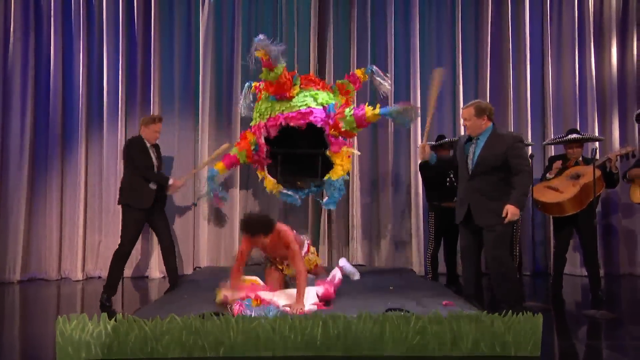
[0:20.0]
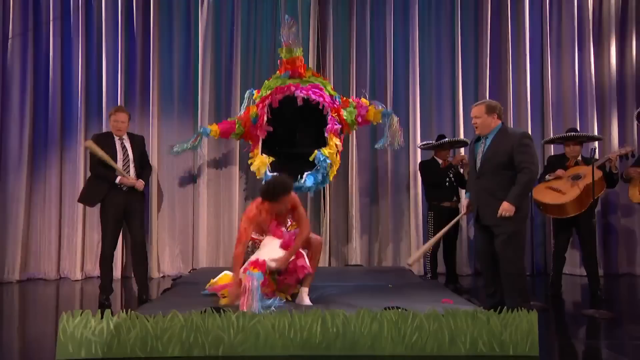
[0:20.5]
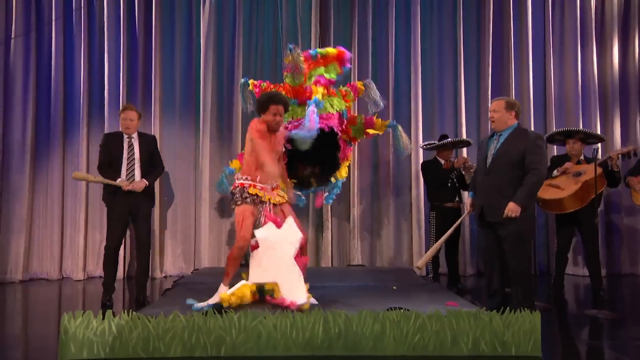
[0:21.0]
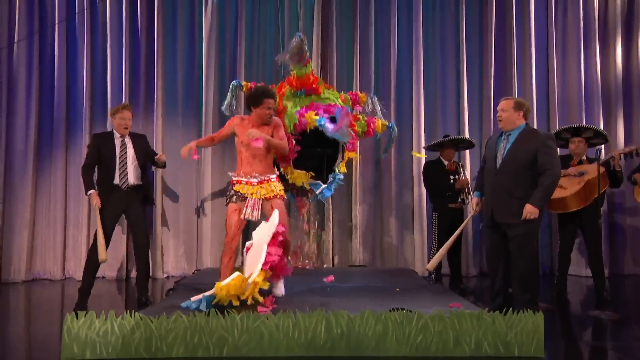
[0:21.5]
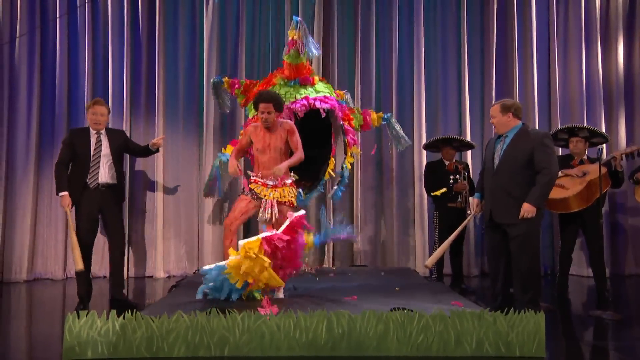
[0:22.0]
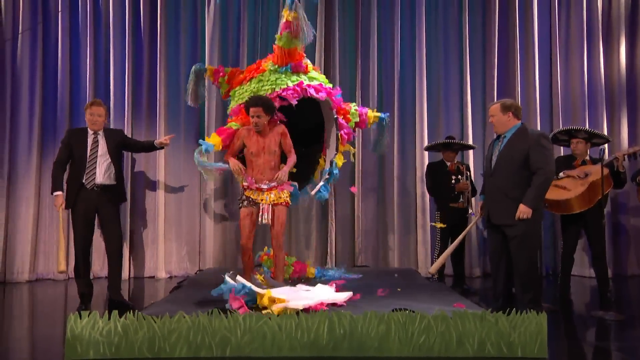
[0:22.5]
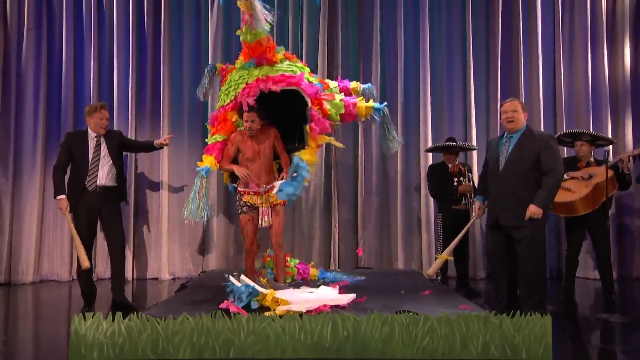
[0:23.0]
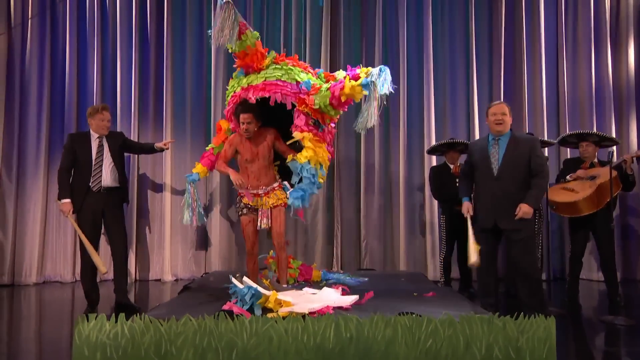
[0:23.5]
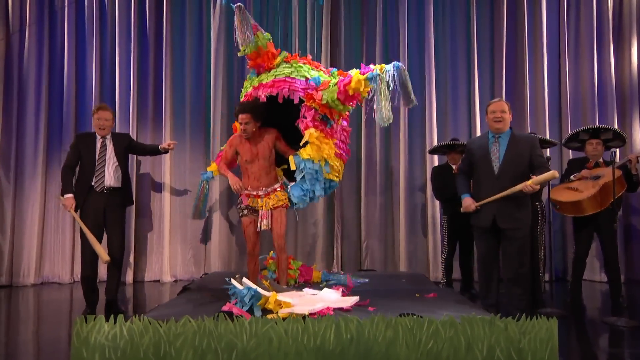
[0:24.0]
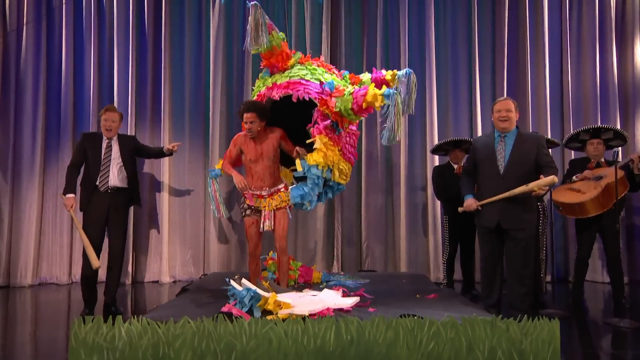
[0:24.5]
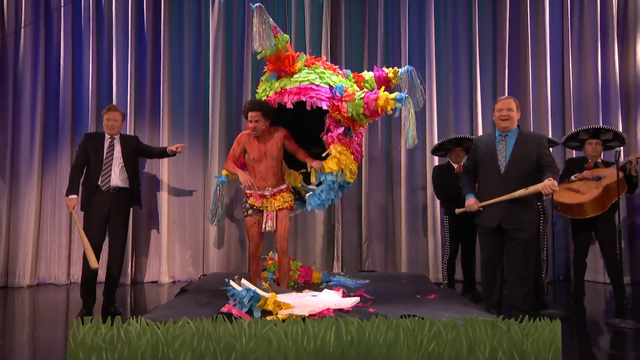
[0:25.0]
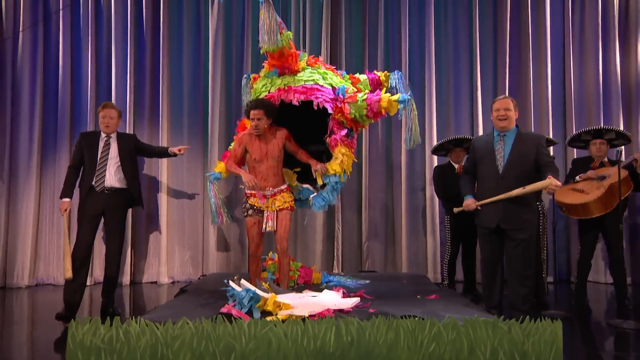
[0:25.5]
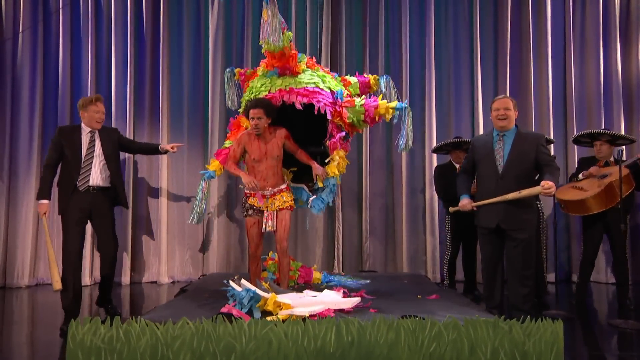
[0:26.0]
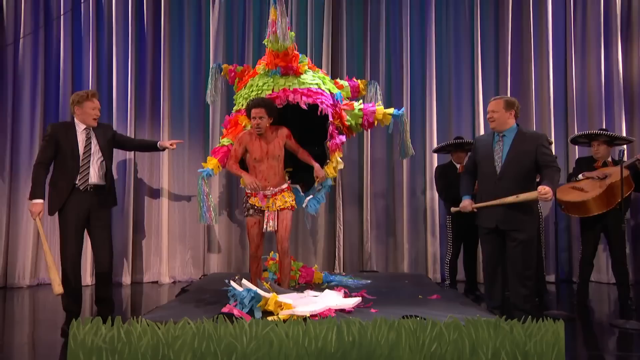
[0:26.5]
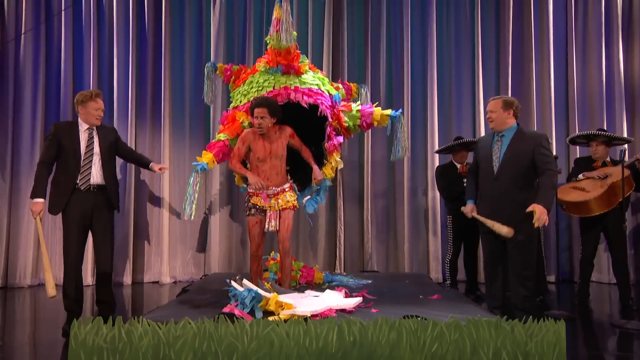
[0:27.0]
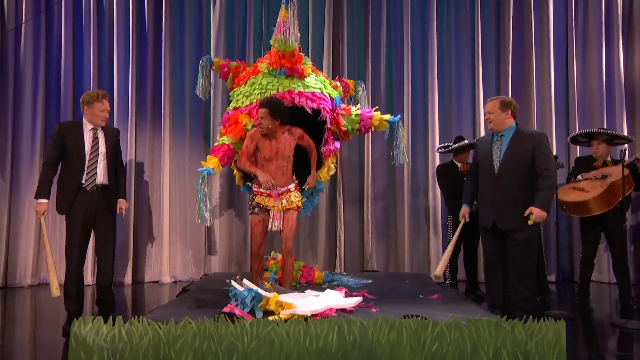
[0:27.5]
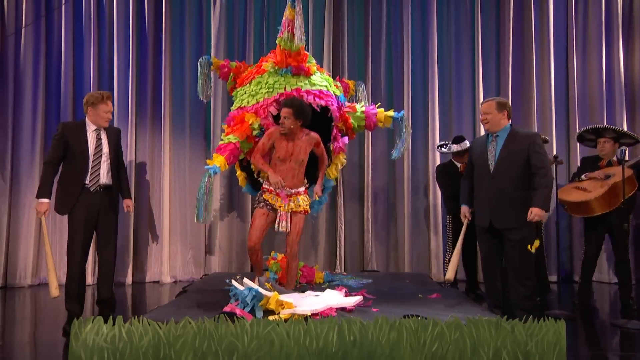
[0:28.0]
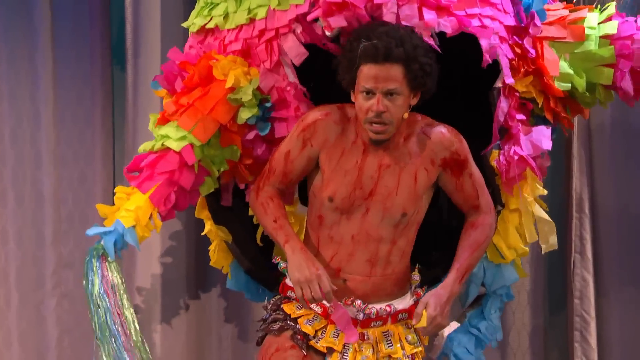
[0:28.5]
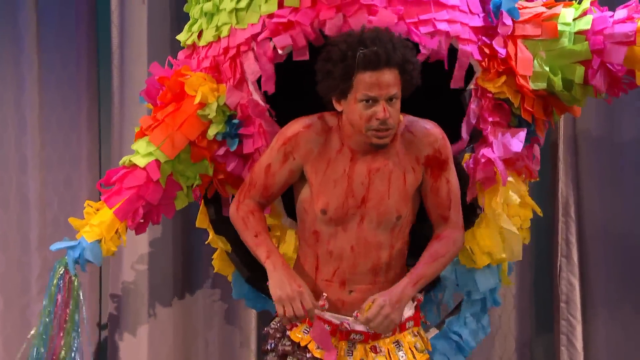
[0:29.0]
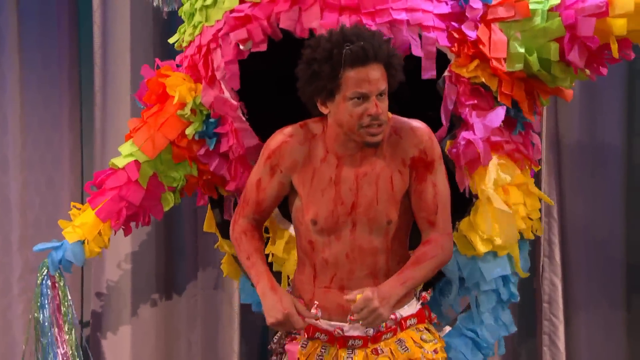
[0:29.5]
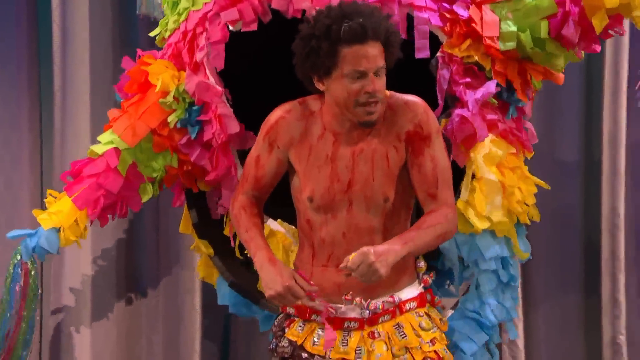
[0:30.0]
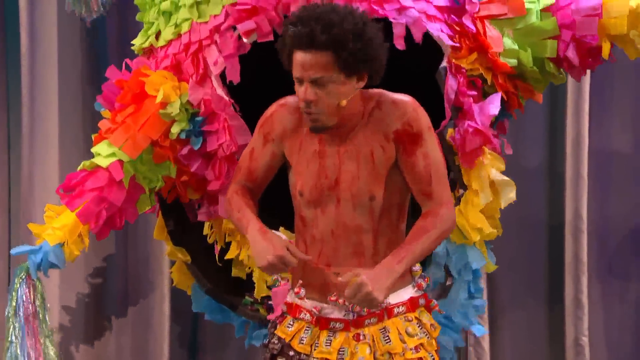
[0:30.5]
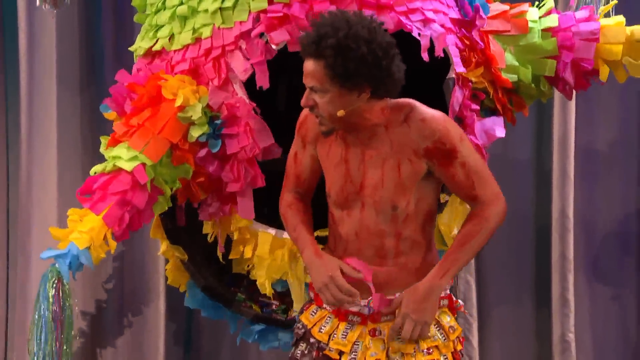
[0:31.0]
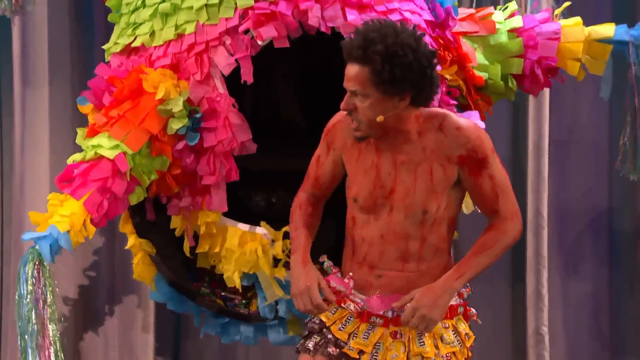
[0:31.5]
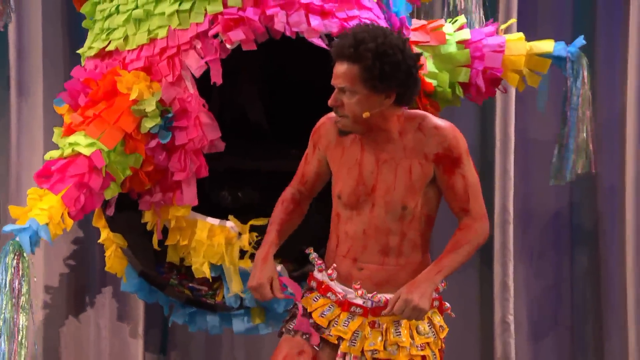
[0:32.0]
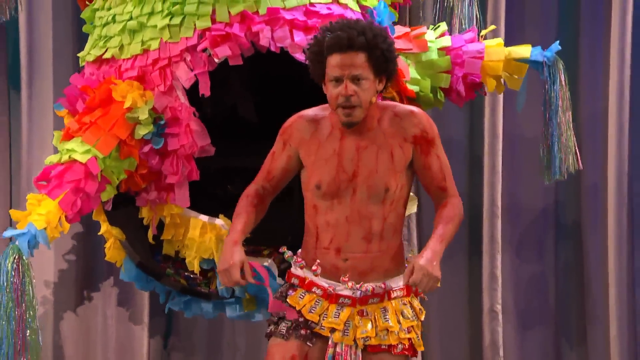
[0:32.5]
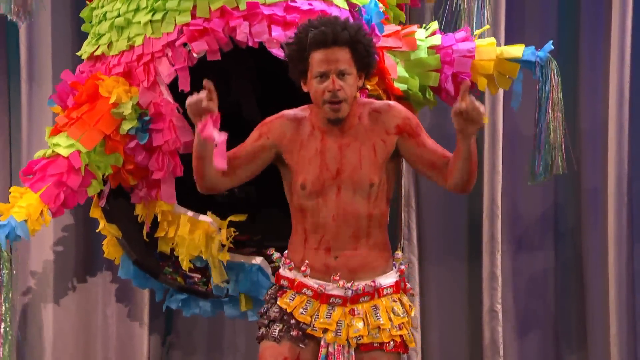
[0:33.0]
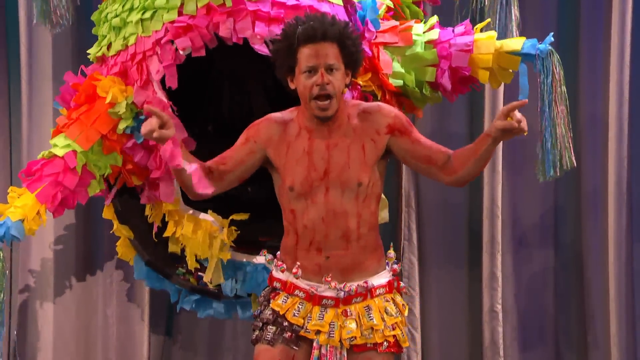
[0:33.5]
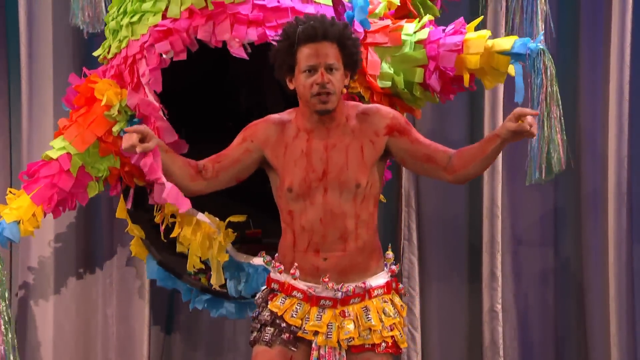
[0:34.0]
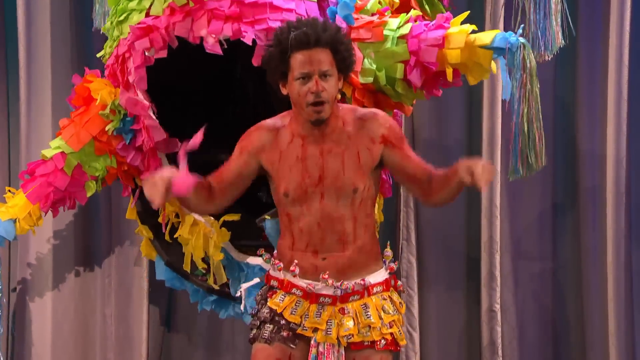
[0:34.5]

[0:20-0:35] A couple of people are on stage. Conan, on the left, points at a man who has just emerged from a piñata, and the open hole of the piñata from which he emerged is visible. The man is bare-chested with some reddish paint on his body, has an afro, and has something yellow around his shorts. On the right side of the frame, a large man in a dark suit with a blue shirt holds a baseball bat in his hand; it looks like he has just beaten the piñata. Two men dressed in black Mexican outfits and hats are also there with a large guitar. The man who came out of the piñata stands looking stunned and a bit upset, with red paint all over him. Conan continues to point as he speaks about the man. The man clenches his fist in indignation and starts to talk, looking upset, as he walks away from the piñata.